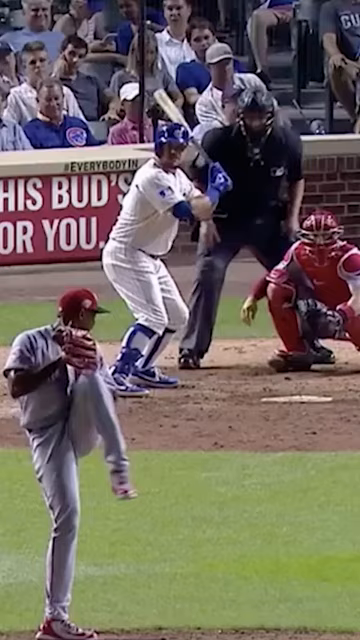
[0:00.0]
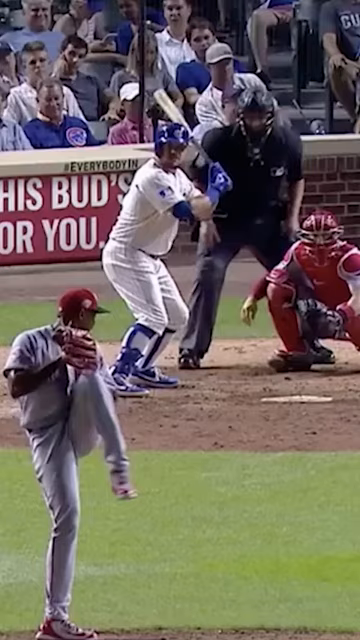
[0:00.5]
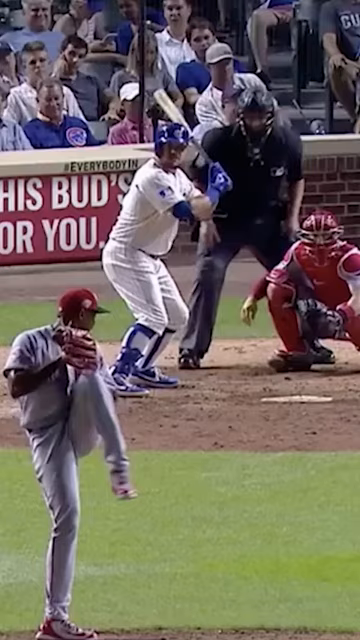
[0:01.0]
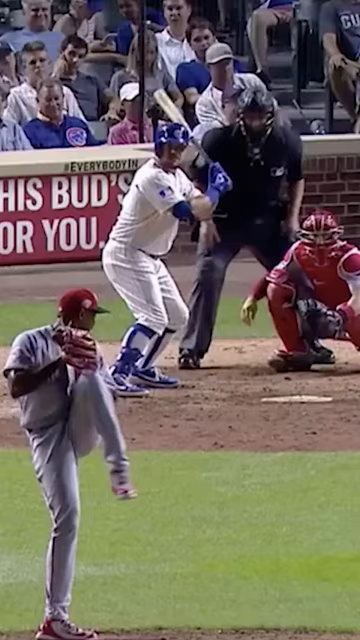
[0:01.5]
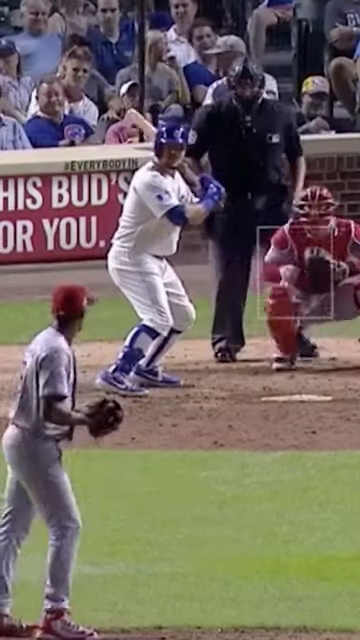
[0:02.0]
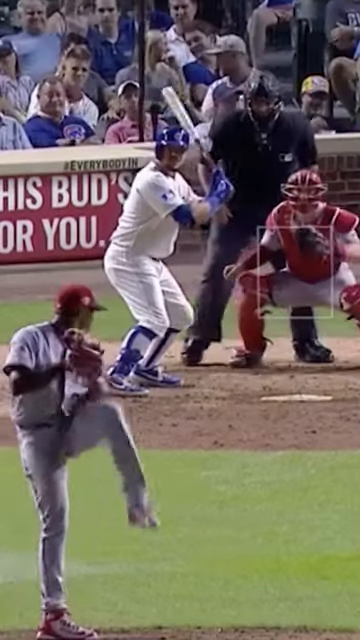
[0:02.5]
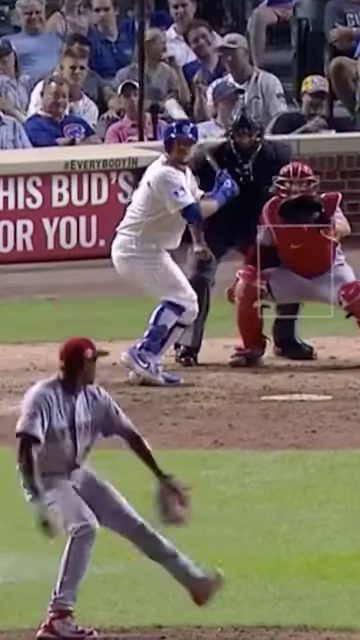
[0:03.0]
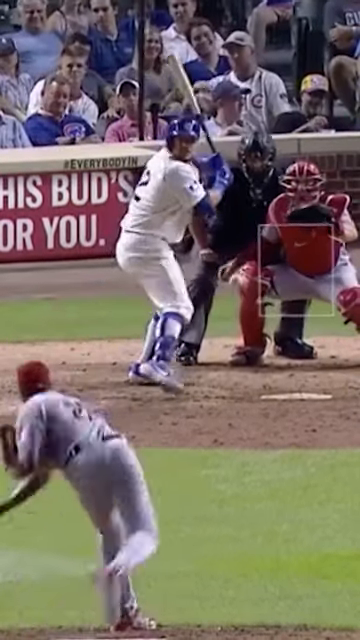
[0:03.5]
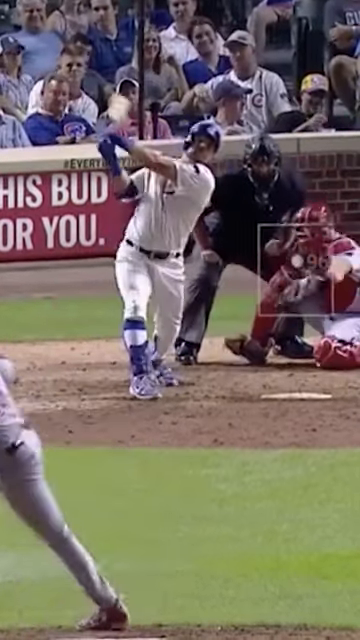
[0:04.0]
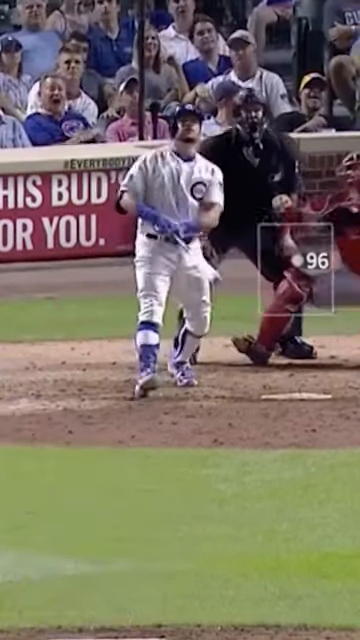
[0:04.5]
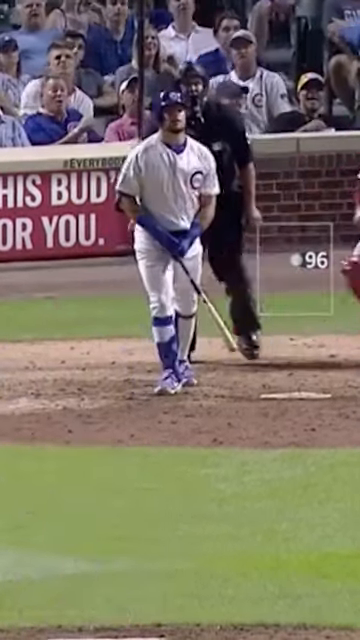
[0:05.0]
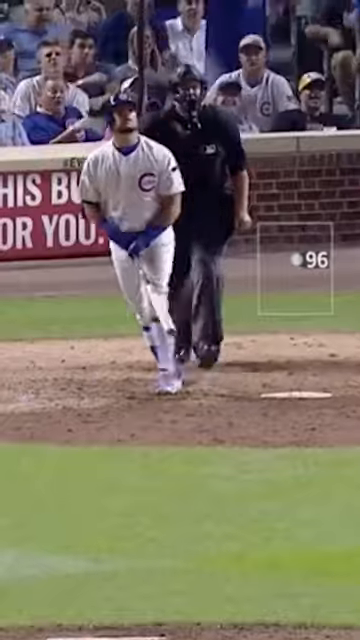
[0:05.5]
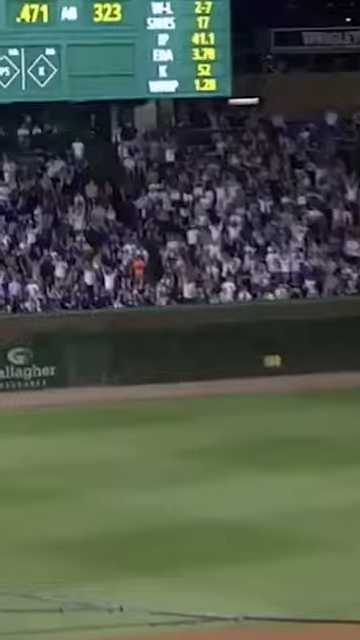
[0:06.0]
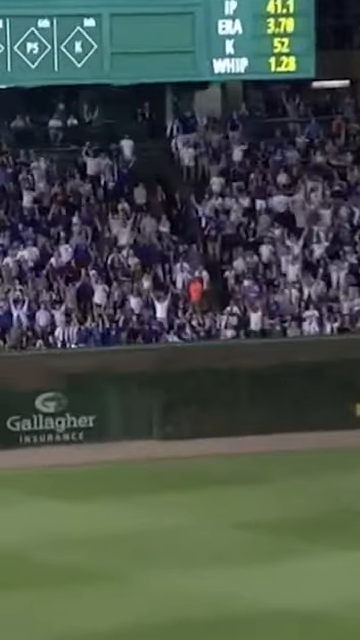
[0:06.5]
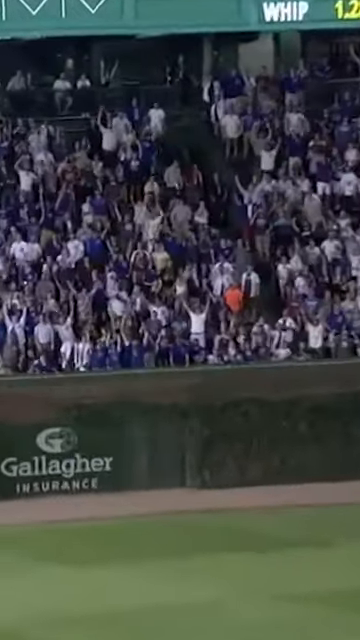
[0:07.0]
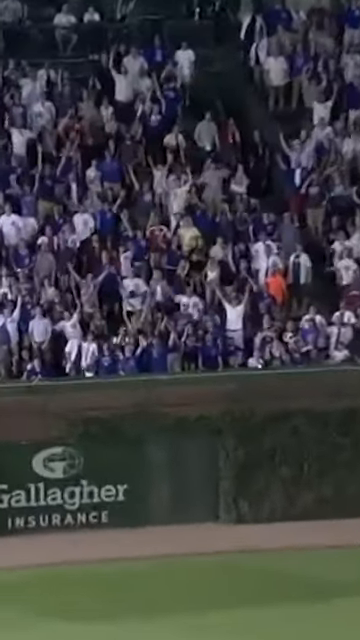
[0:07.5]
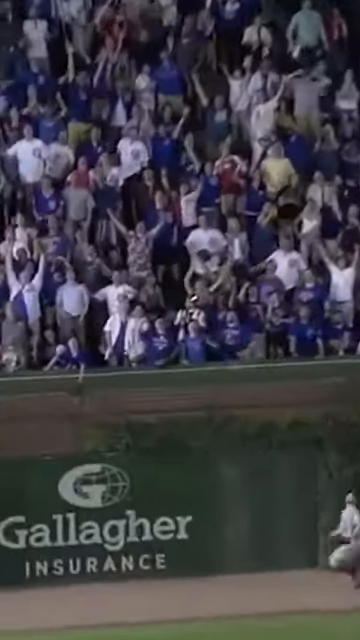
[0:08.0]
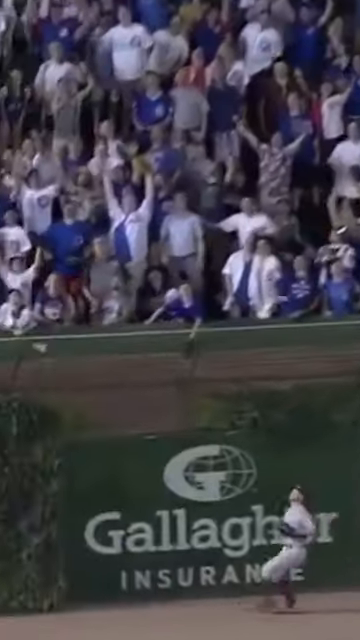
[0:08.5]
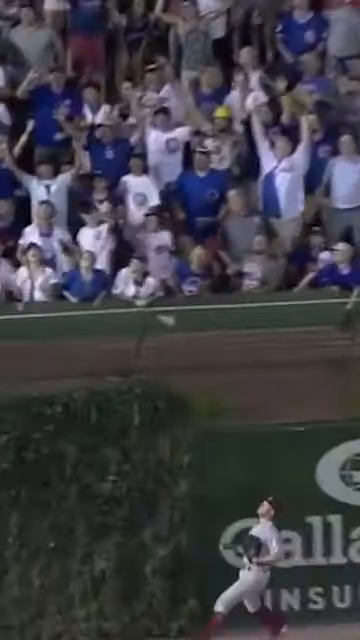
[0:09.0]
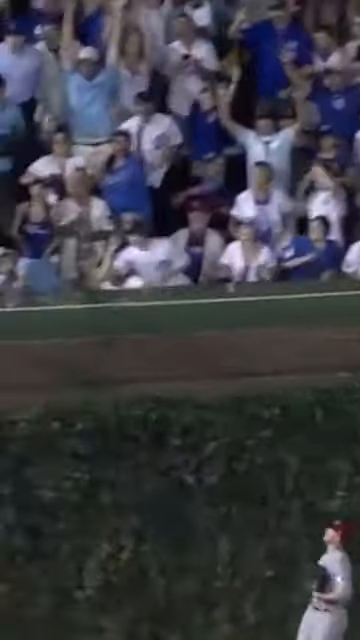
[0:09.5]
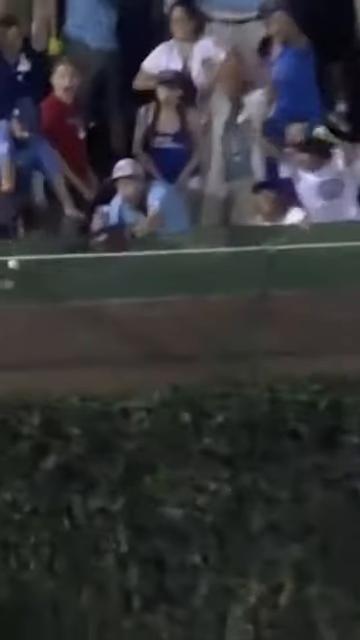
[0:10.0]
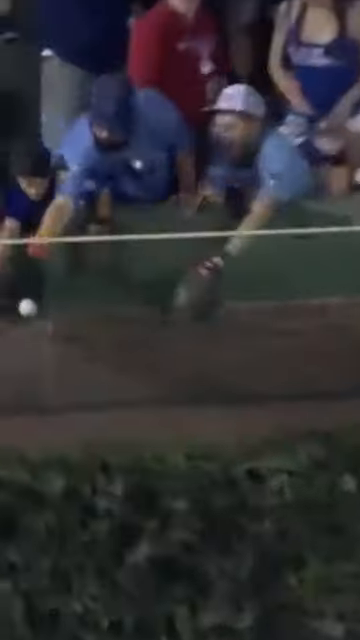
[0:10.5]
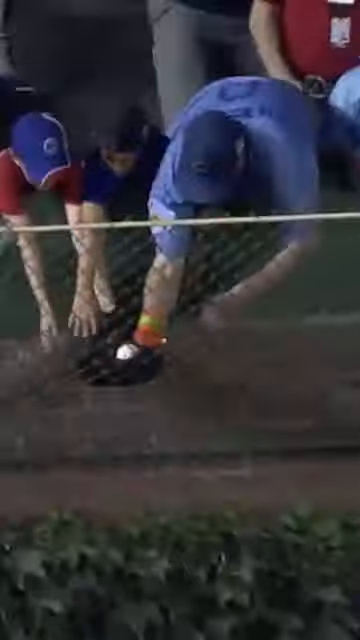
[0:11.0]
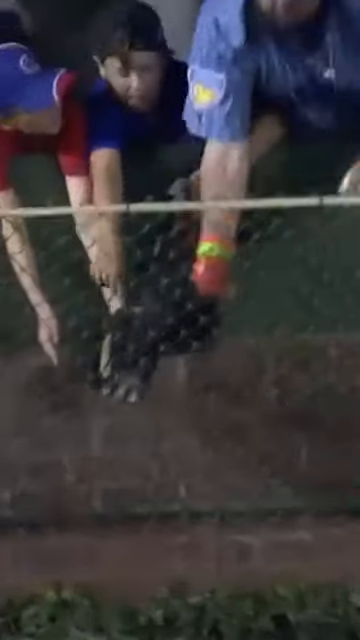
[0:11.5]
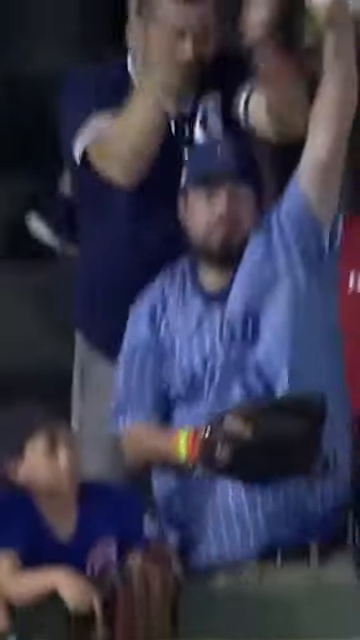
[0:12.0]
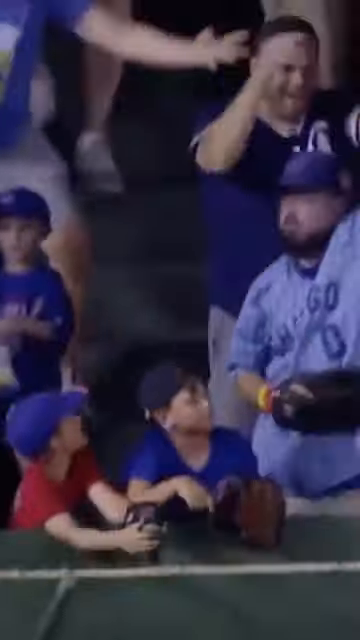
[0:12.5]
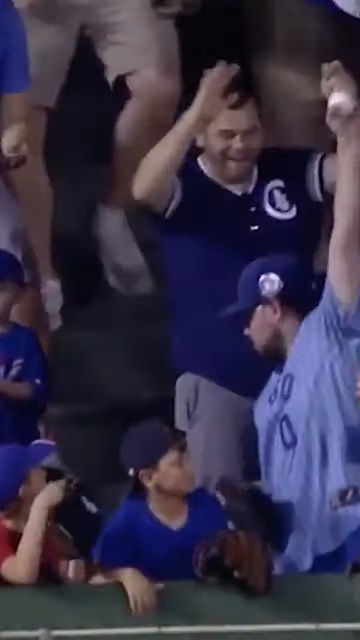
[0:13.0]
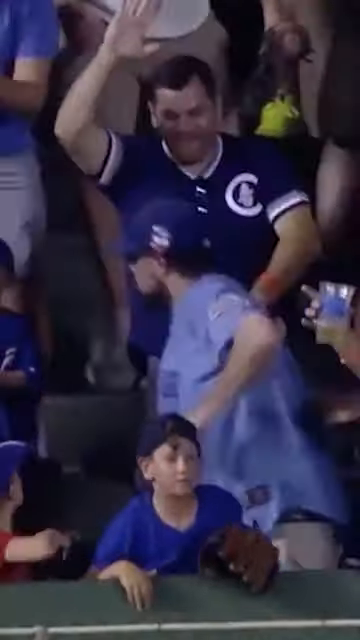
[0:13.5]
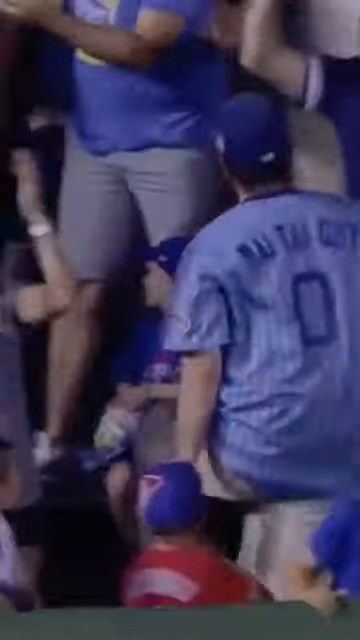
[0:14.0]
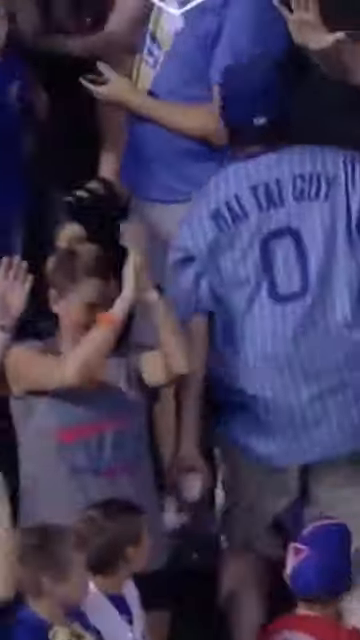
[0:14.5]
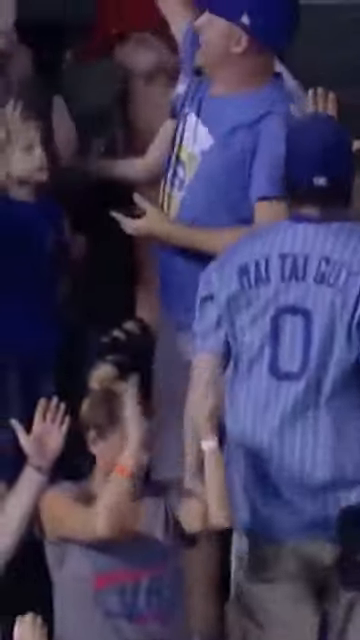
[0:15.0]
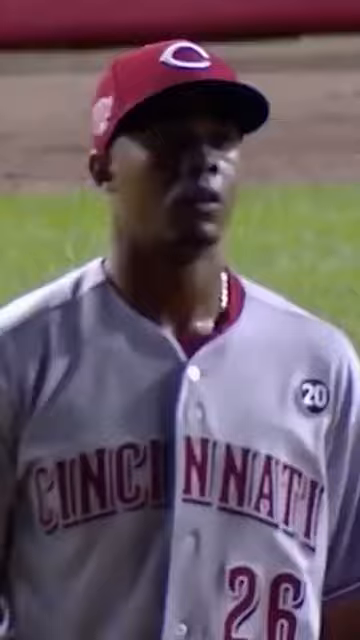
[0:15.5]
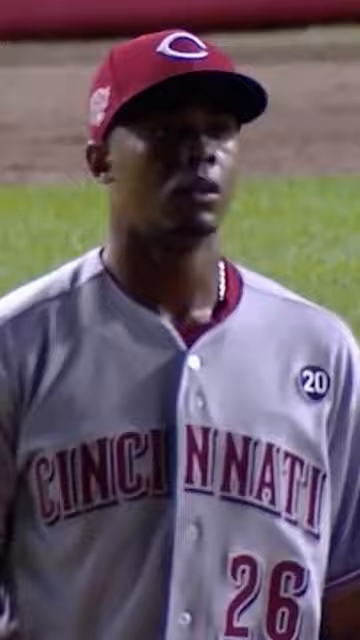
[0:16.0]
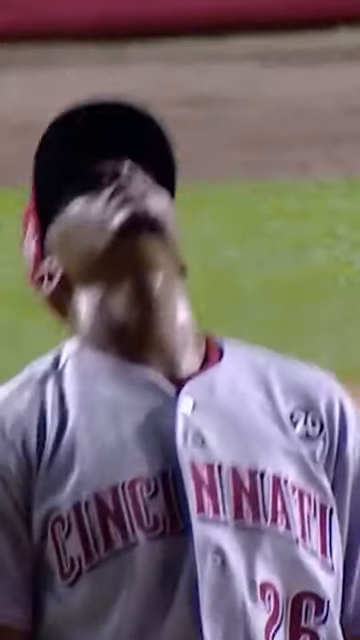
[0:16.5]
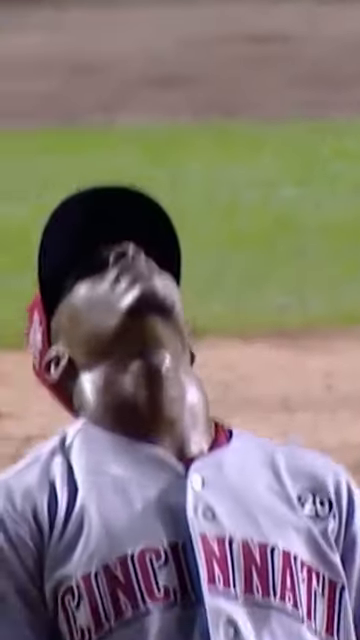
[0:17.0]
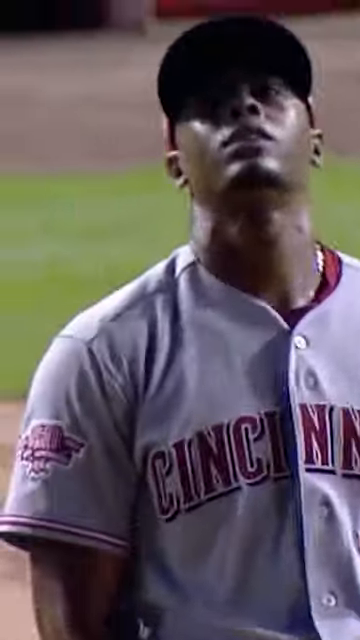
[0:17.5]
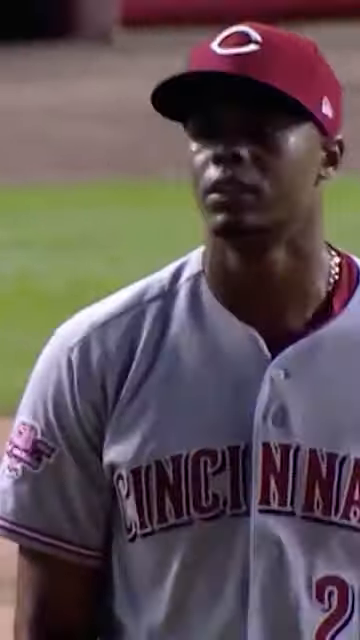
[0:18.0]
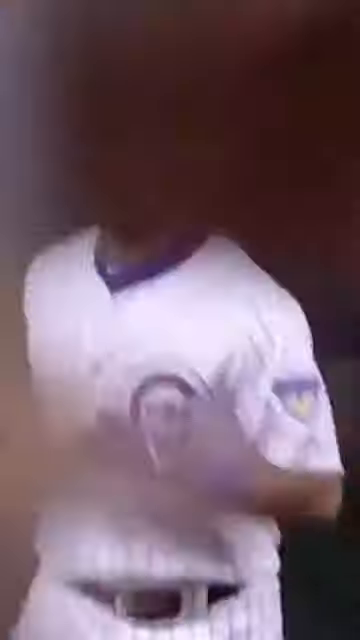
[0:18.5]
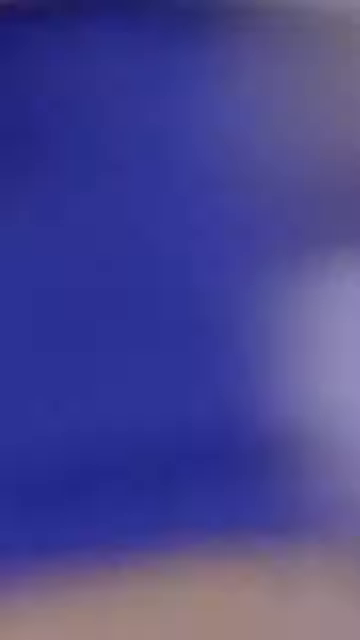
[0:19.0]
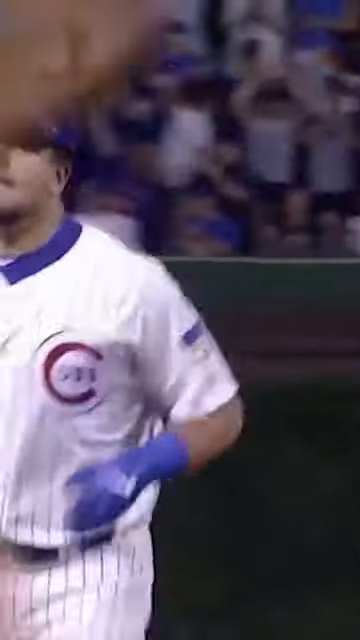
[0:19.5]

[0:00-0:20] In a baseball game, a pitcher is about to pitch to the batter. The batter hits the ball for a home run, sending it over the fence, where a fan catches it. The pitcher, from the Cincinnati Reds, looks very upset, and his face is visible as the ball goes over the fence. The batter appears to be from the Chicago Cubs, and it may be a home game for them. The scoreboard is not clearly visible. The fans are very excited. The Cubs wear blue and white, while the Cincinnati Reds wear gray and red.